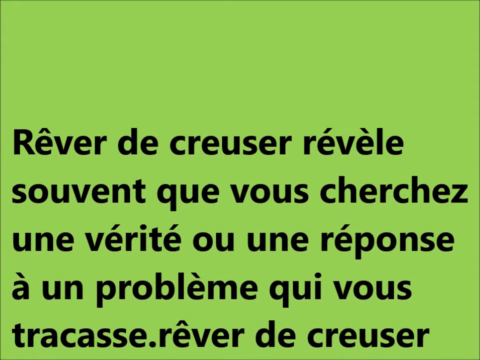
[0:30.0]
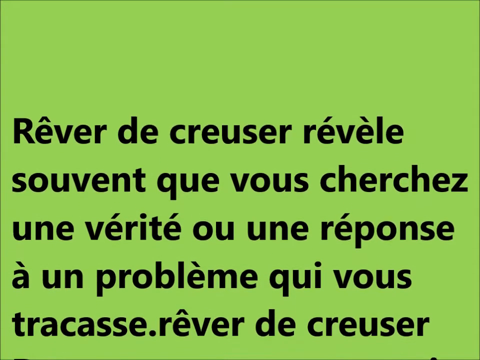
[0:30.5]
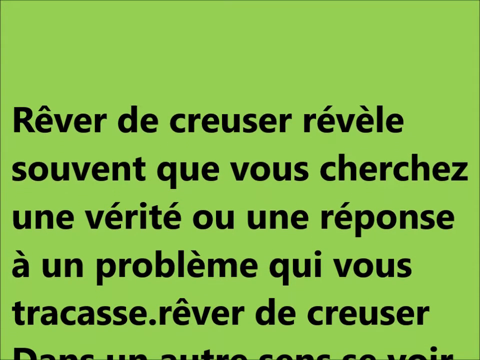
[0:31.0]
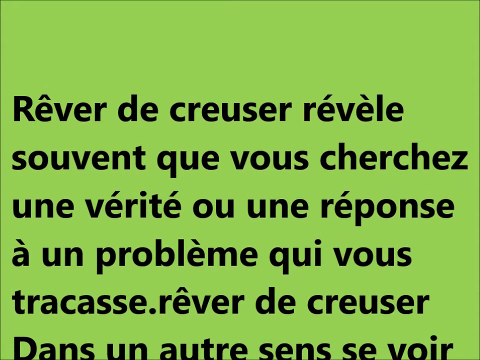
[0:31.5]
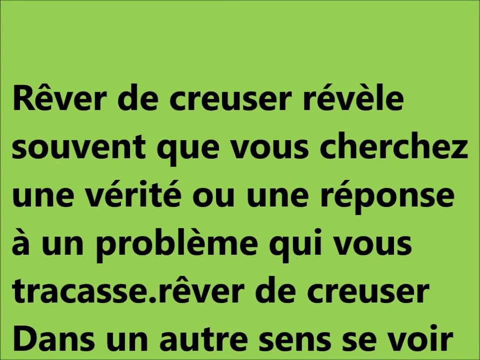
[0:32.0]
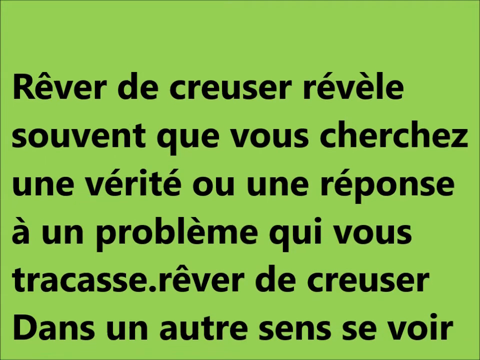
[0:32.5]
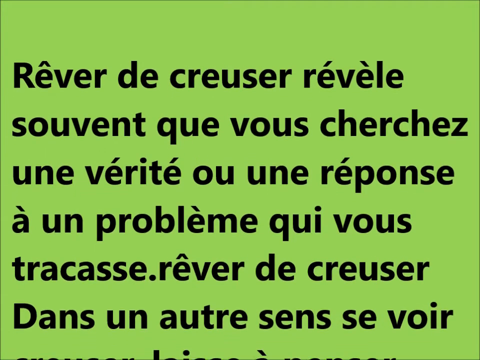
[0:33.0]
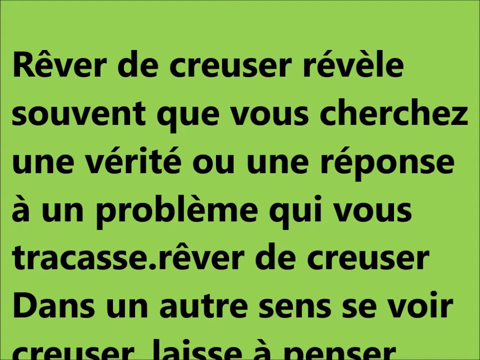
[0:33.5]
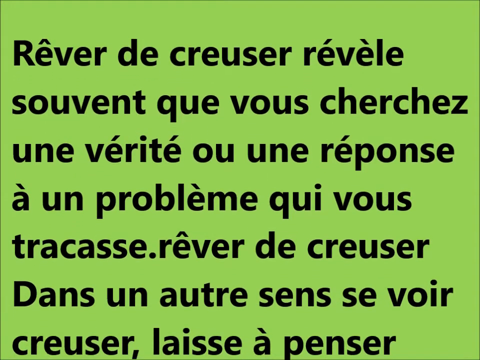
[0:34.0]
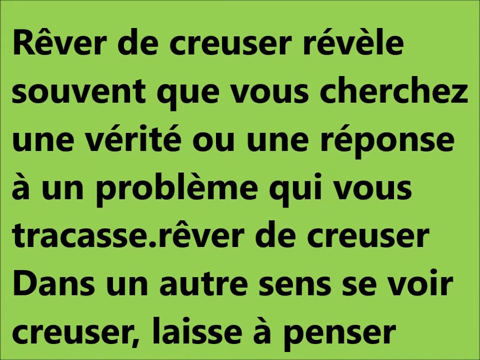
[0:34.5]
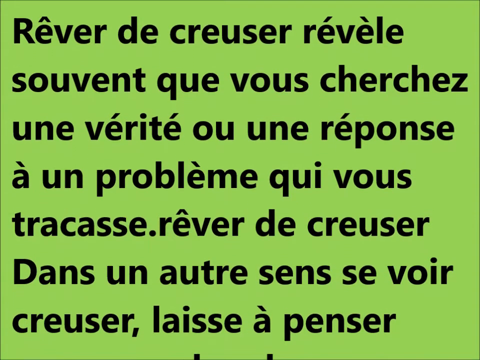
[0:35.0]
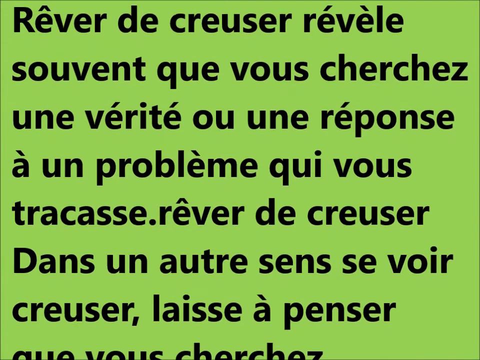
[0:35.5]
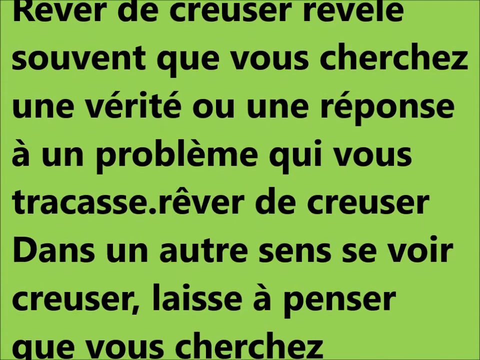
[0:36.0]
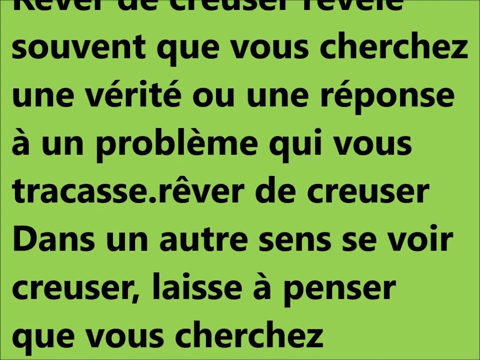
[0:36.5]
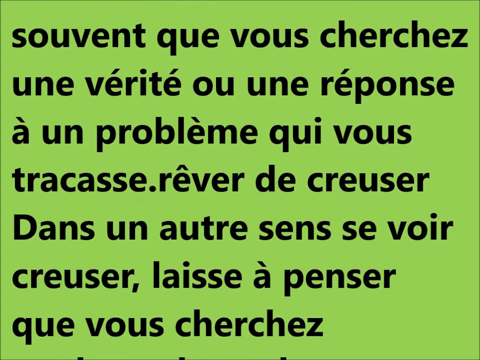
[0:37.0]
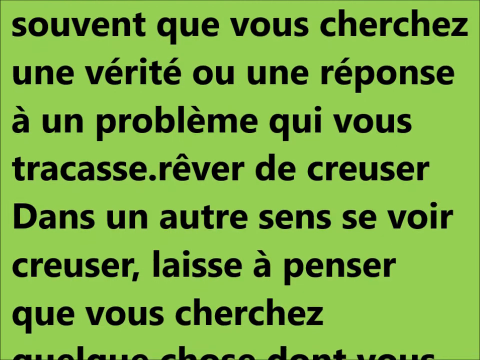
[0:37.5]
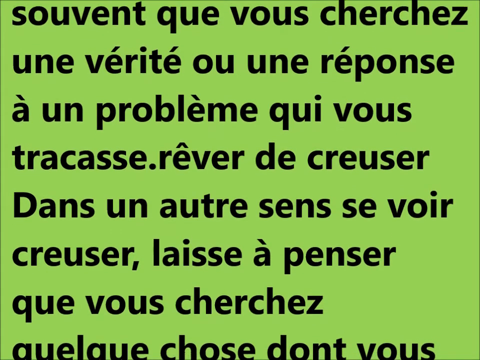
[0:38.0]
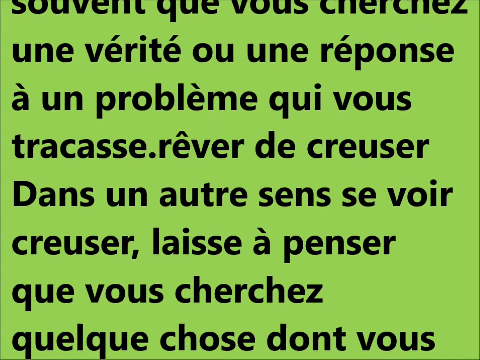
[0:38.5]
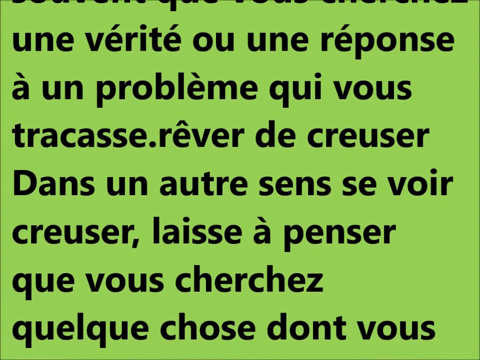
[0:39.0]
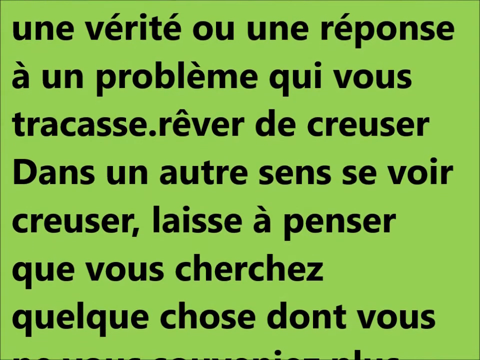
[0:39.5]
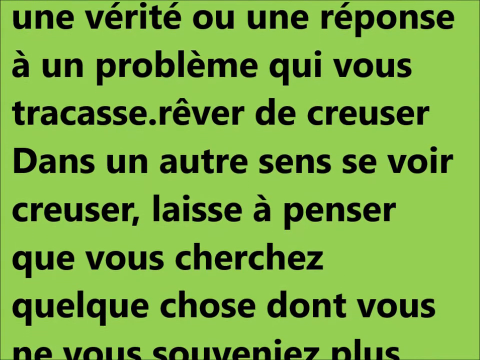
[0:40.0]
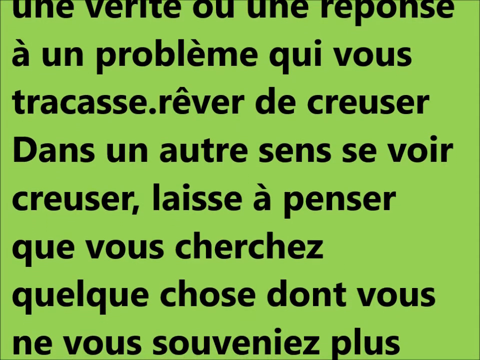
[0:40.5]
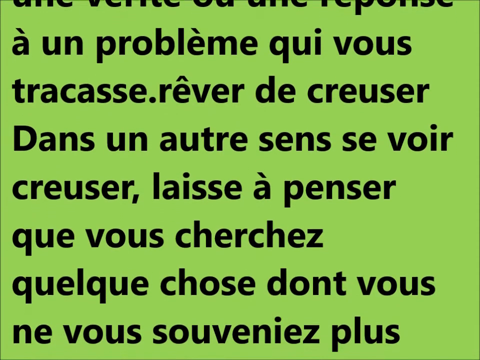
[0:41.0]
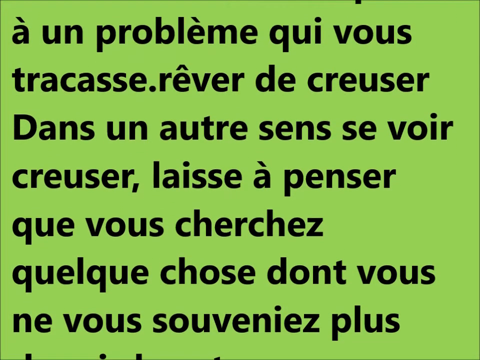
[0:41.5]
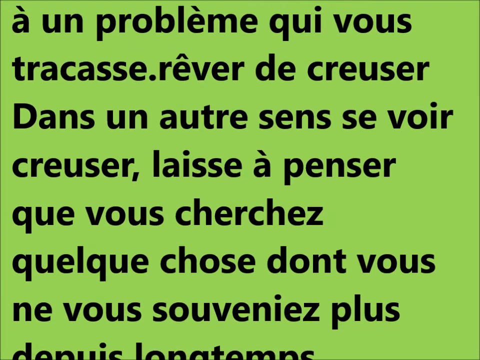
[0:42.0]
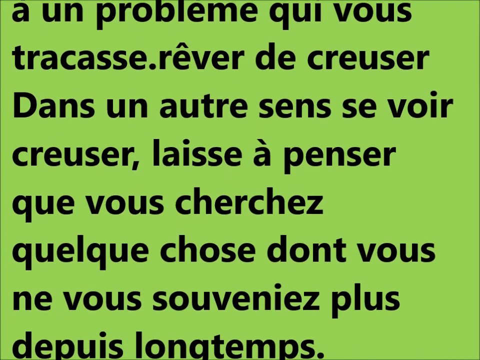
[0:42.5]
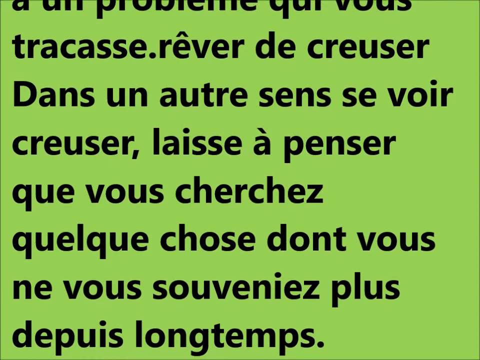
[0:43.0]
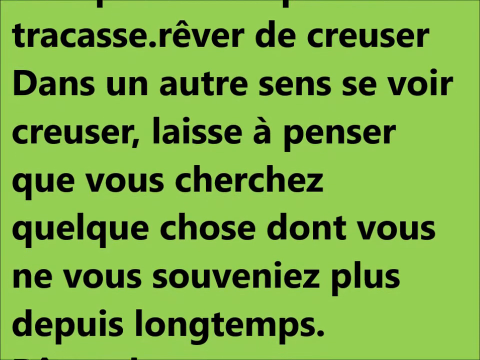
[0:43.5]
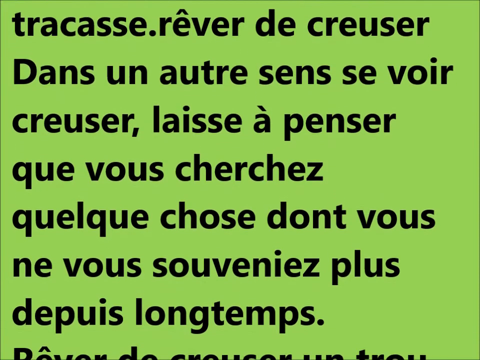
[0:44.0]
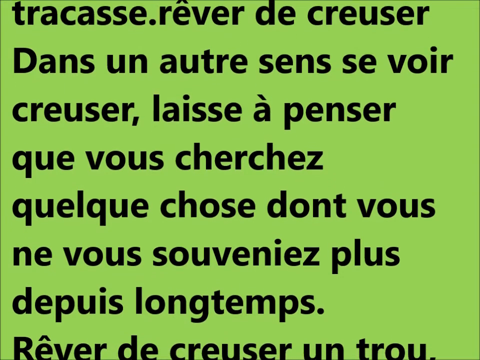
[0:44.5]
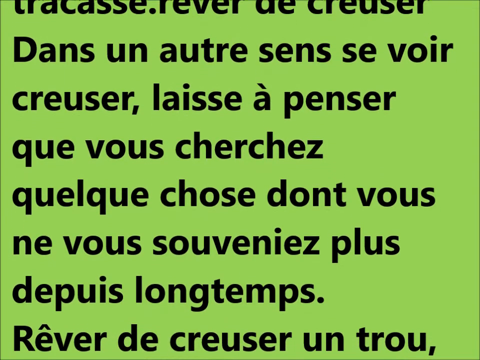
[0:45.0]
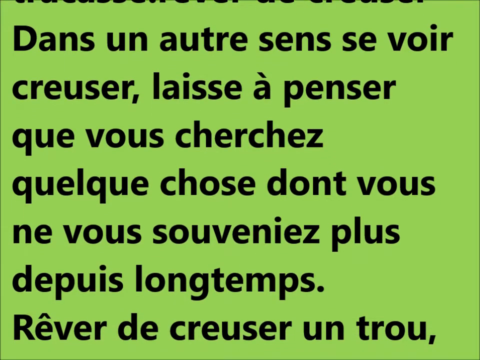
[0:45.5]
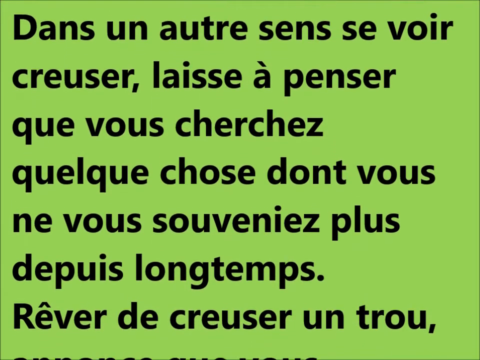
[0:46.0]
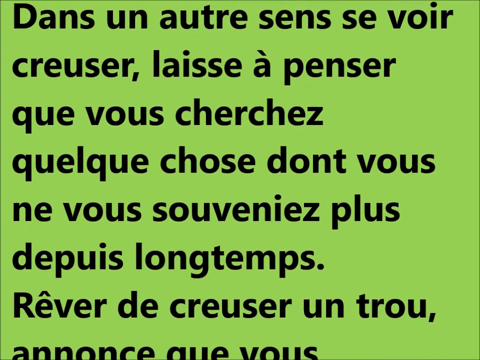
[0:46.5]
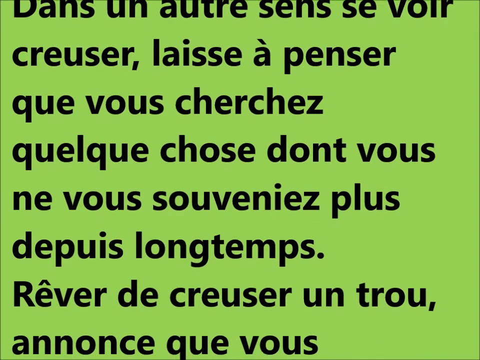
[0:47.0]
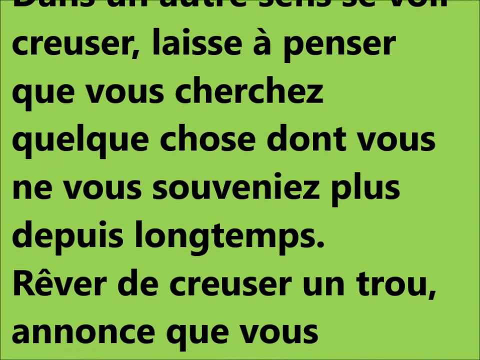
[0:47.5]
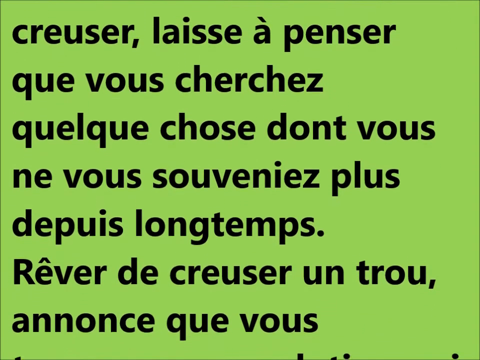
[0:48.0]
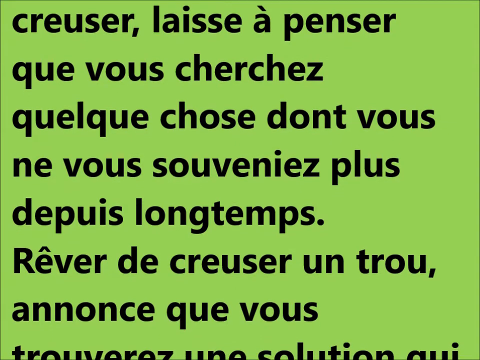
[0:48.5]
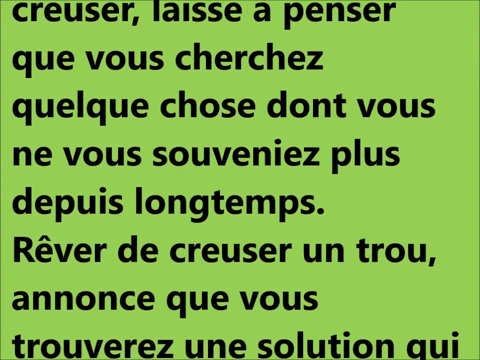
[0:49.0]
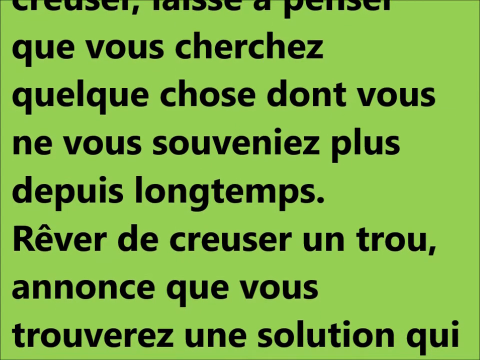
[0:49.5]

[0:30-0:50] Black text in a bold font scrolls slowly up a green screen from bottom to top, gradually revealing all of it. The text is in French and defines what a rêve de creuser is: a type of dream in which one searches for the truth and looks for an answer to a problem one is suffering. It indicates that these are important dreams that reveal a truth or answer a question about a problem.